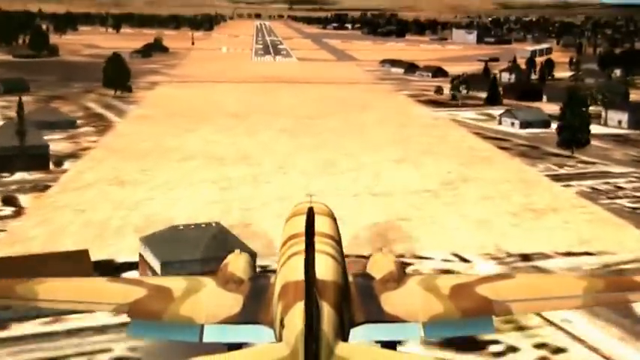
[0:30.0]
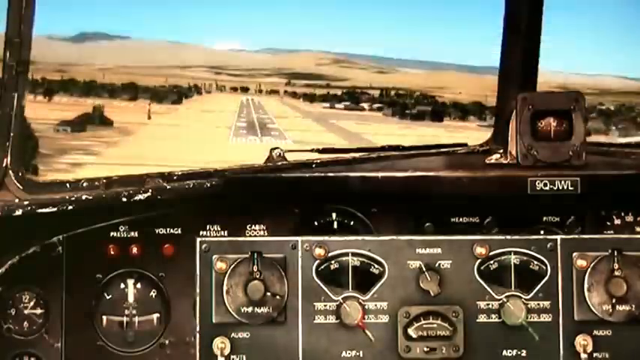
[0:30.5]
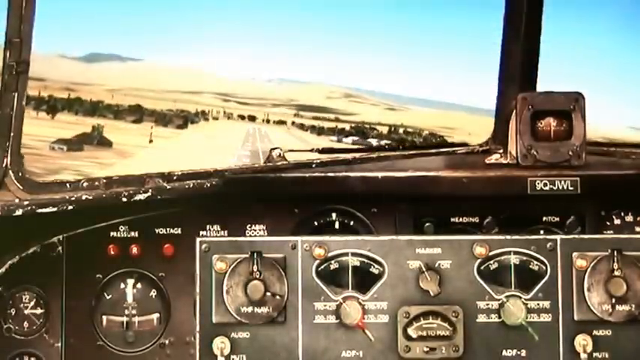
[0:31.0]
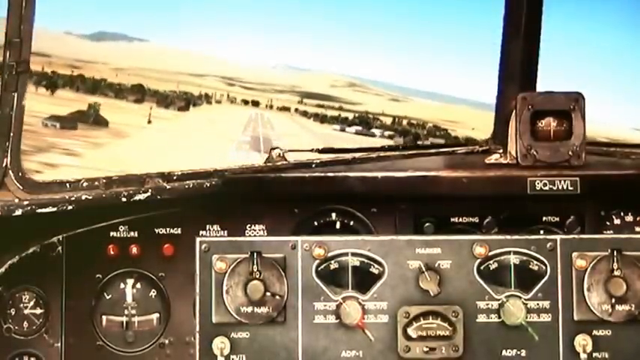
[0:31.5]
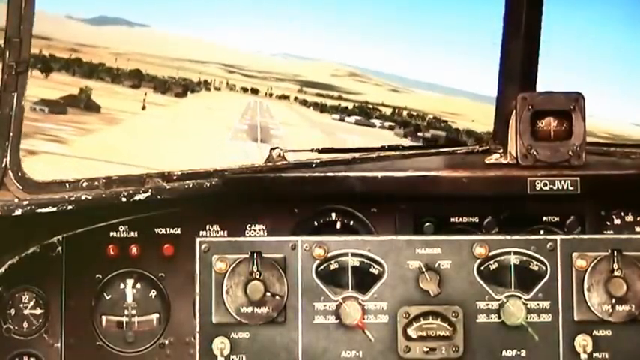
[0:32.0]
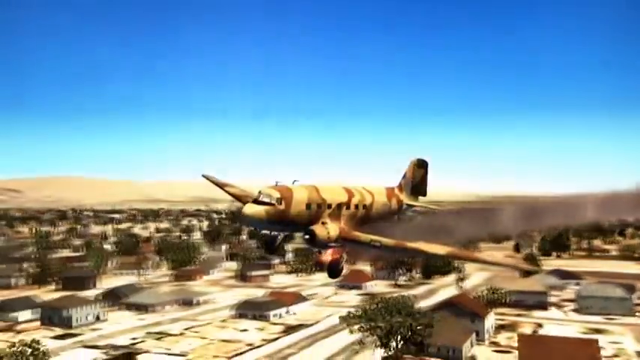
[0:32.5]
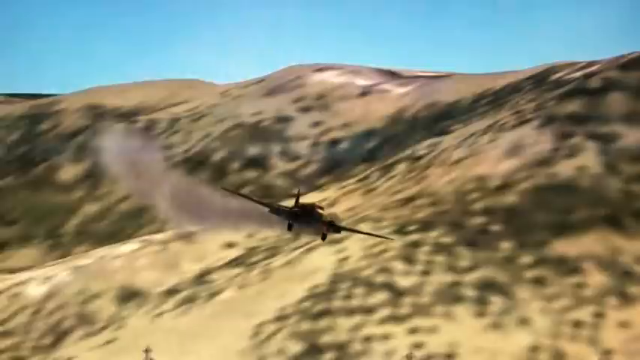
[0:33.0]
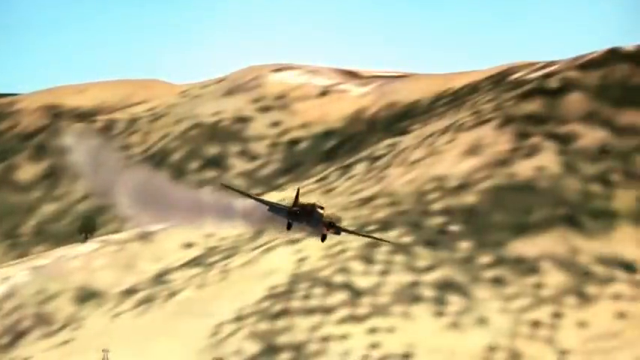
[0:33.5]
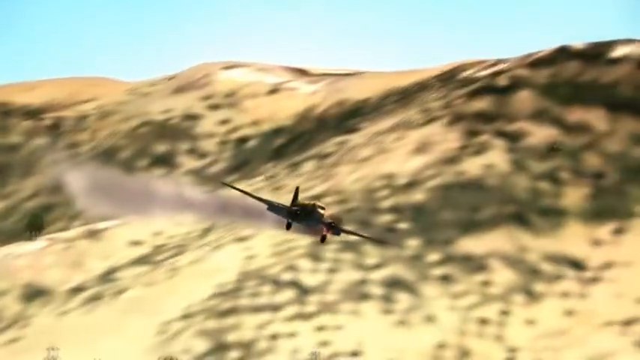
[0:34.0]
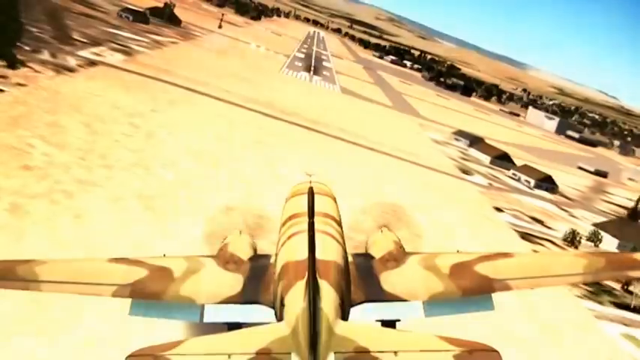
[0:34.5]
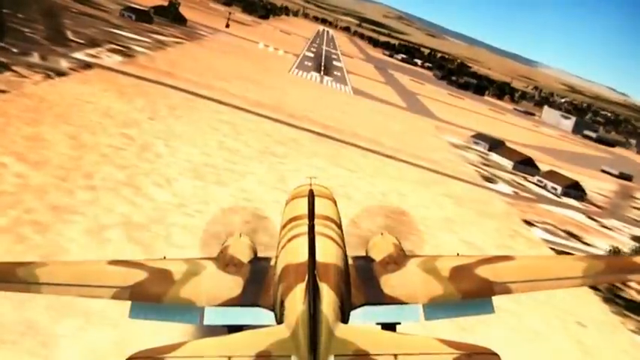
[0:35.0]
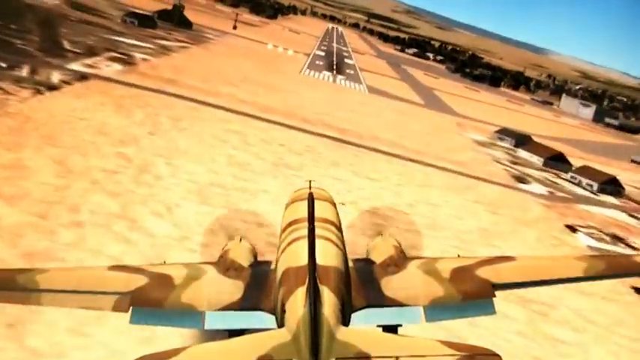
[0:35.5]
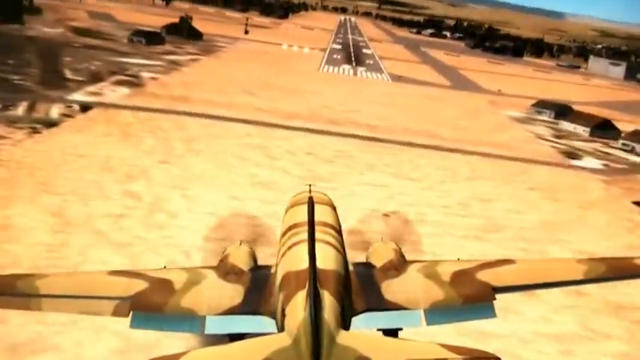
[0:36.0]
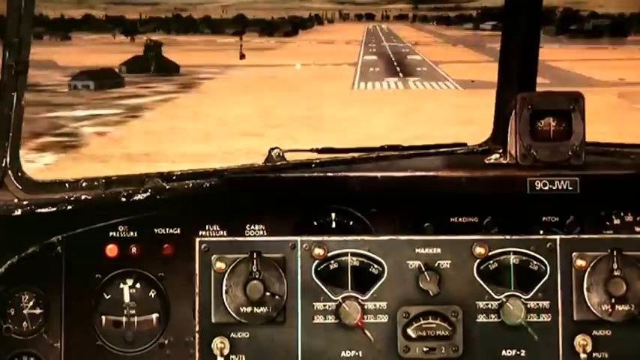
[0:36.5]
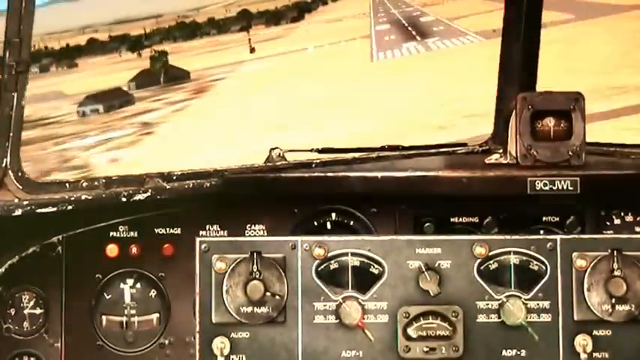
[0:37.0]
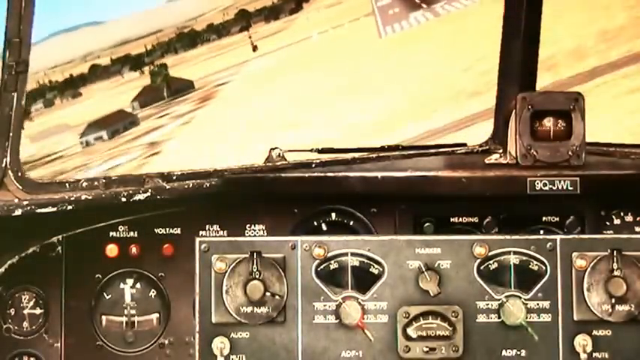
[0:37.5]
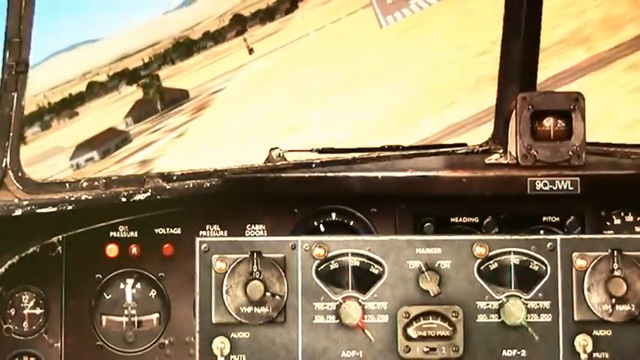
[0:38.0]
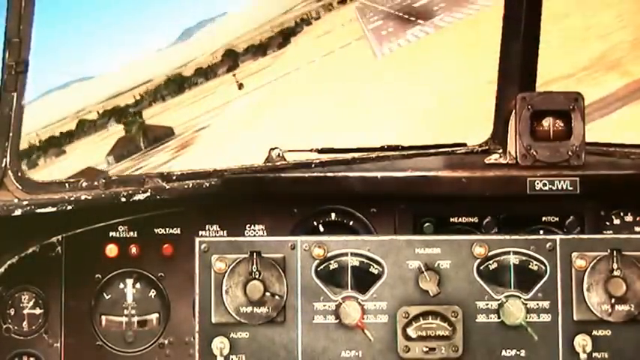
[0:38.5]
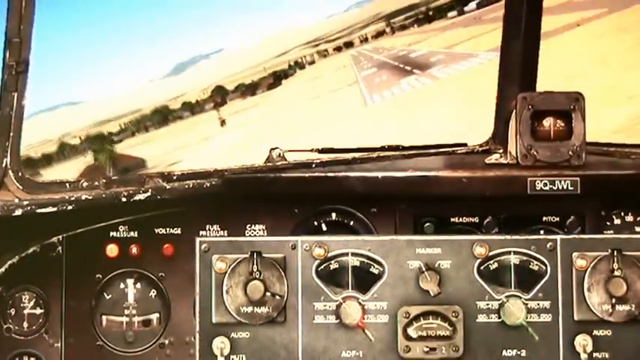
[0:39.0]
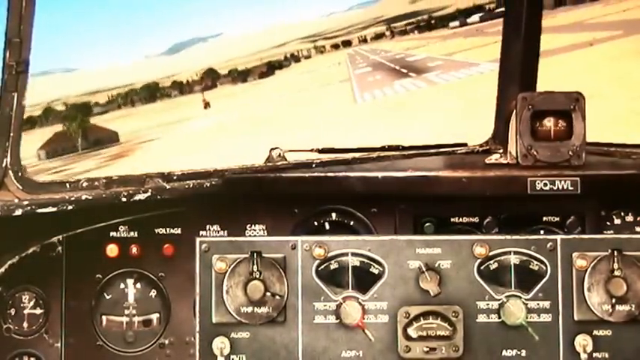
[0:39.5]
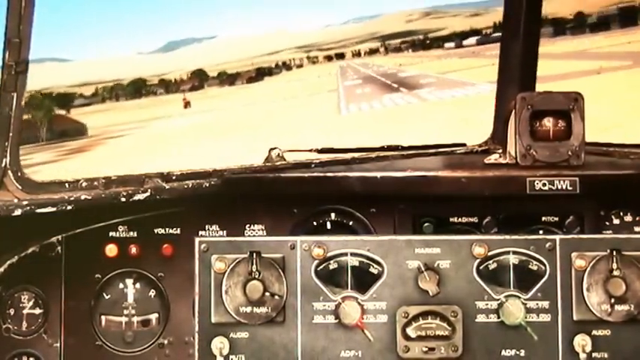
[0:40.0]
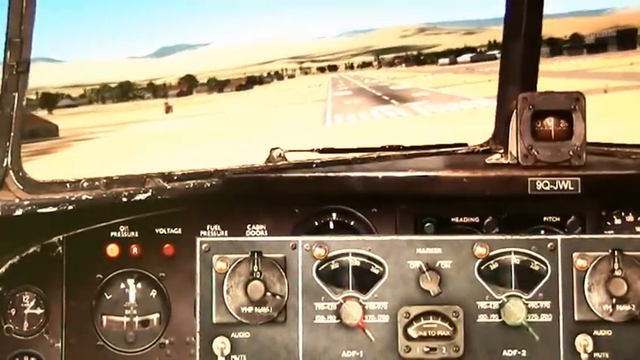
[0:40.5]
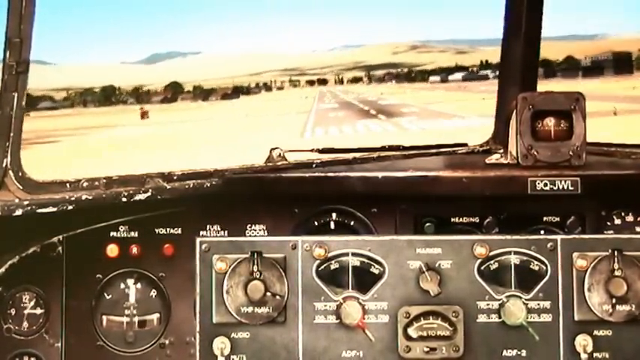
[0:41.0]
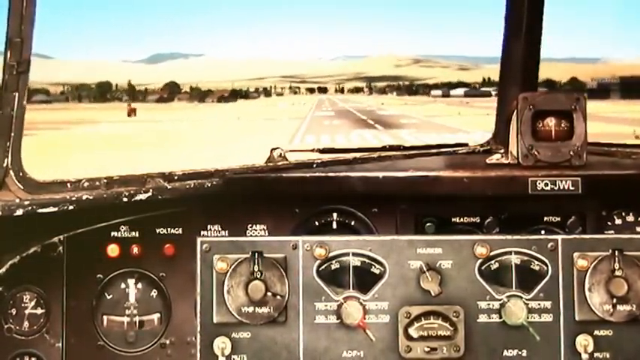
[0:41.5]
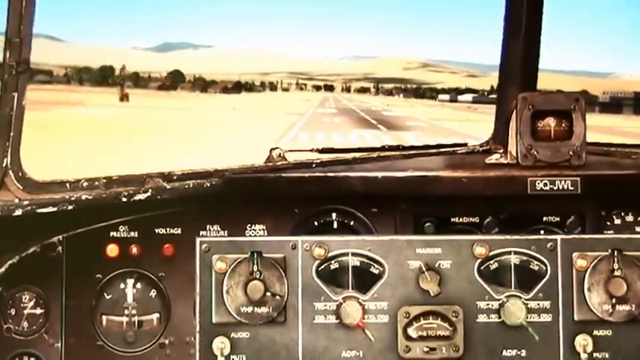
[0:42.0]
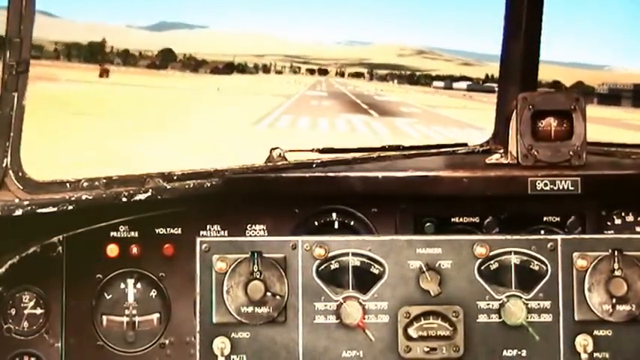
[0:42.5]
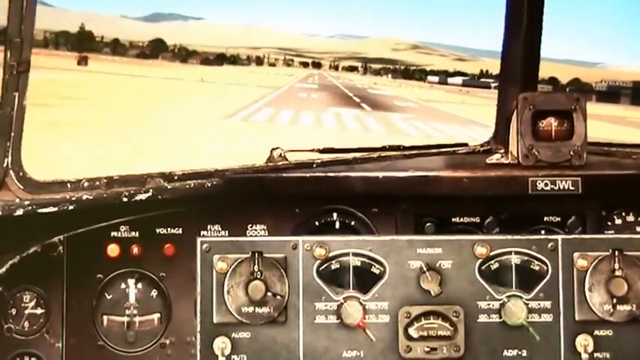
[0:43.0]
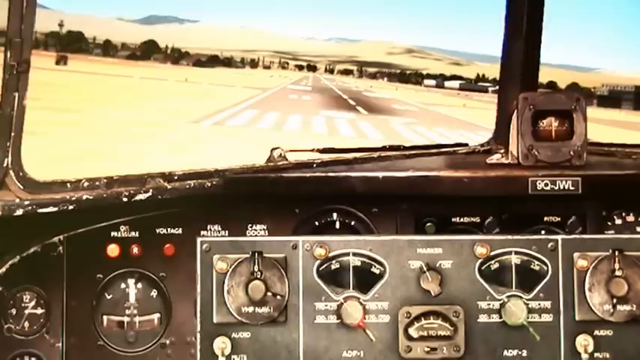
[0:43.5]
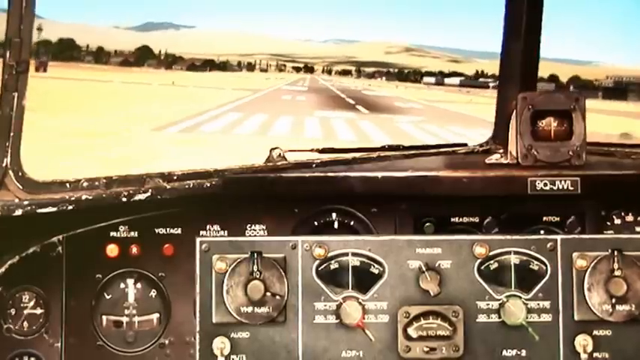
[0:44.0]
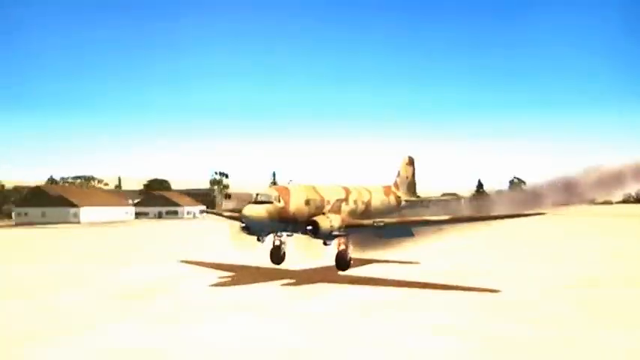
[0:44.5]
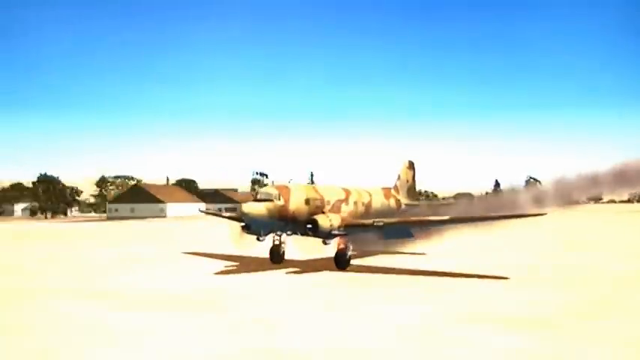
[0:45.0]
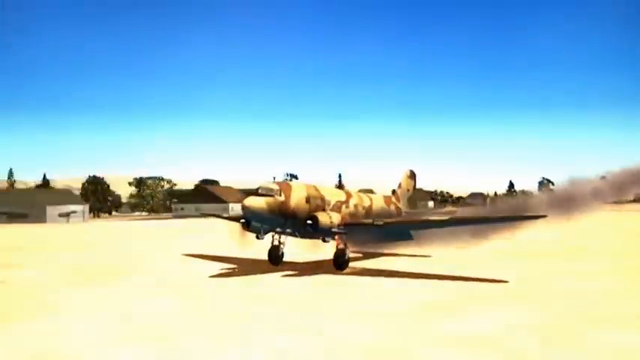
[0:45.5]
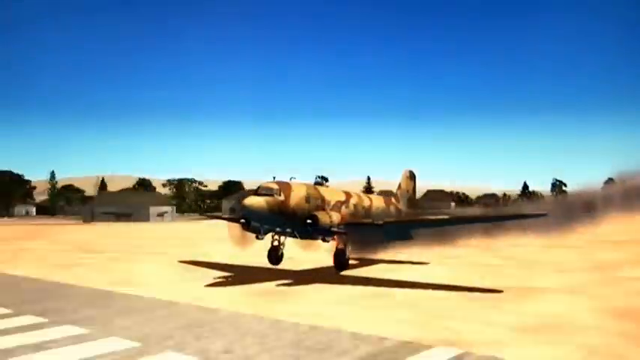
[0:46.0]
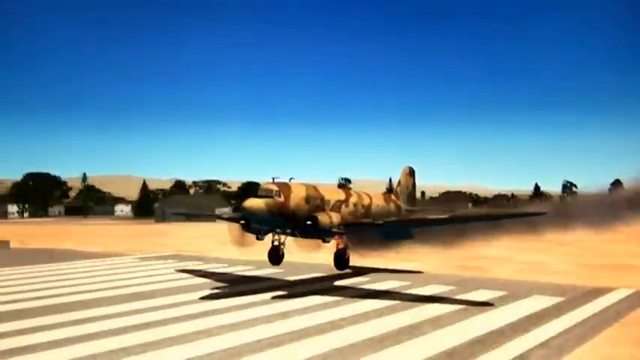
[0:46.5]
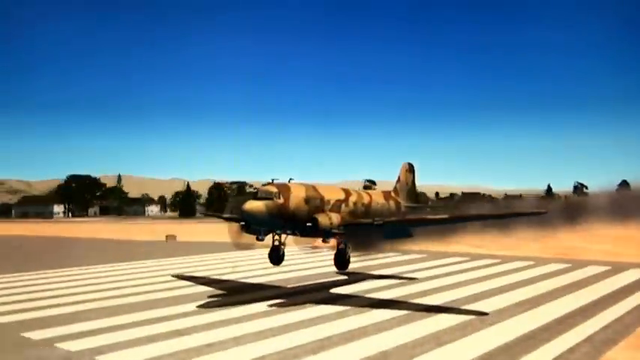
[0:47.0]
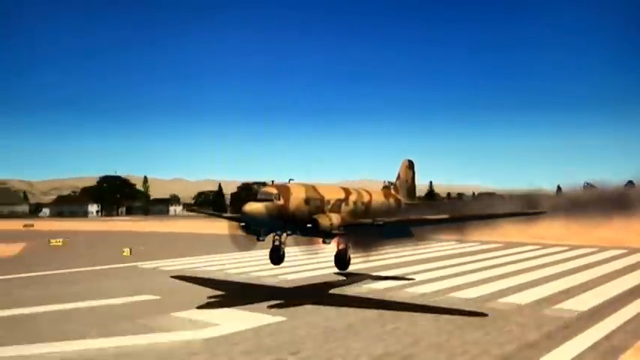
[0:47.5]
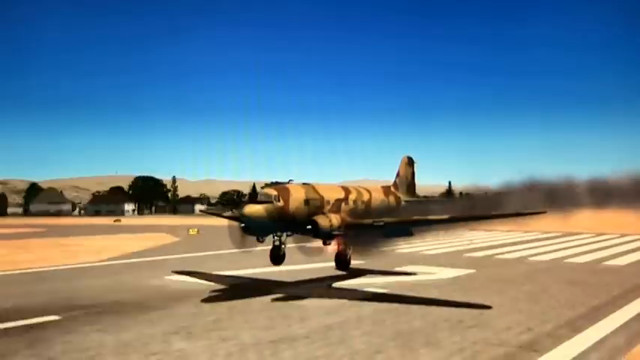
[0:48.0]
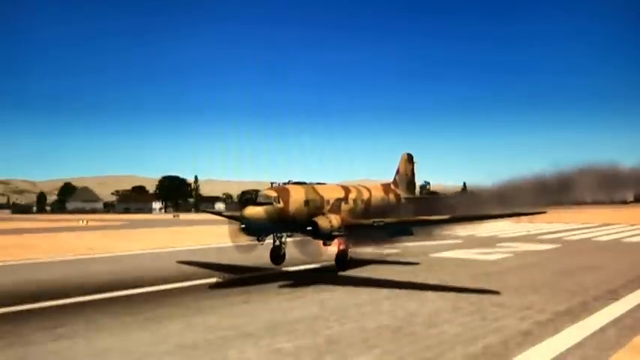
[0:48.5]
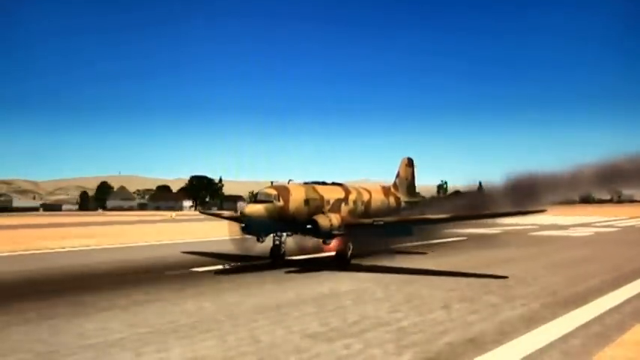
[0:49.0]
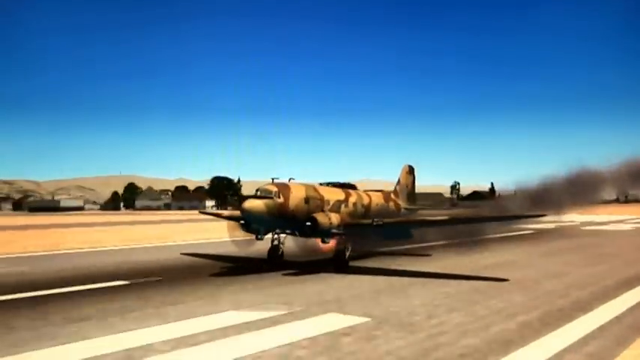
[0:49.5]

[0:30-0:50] In the video game, someone pilots a camouflaged plane described as a biplane with two engines, one on each side. Its left engine is on fire, and smoke comes out the tail as it flies and tries to land on a runway in a desert area. Views alternate between outside the plane looking at it and inside the plane looking out at the terrain. A cockpit view shows the instrument panel with various gauges, toggles and instruments; the inside of the cockpit looks older, with chipped paint. The plane comes in for a landing, repeatedly adjusting left and right, and eventually lands, bouncing on the runway but landing safely. Houses are visible in the distance as it lands, and the shadow of the plane's silhouette is on the ground.